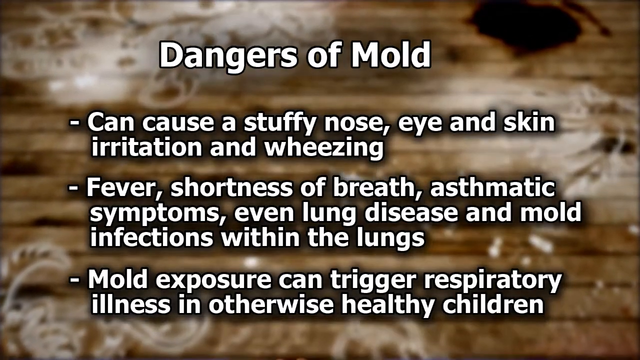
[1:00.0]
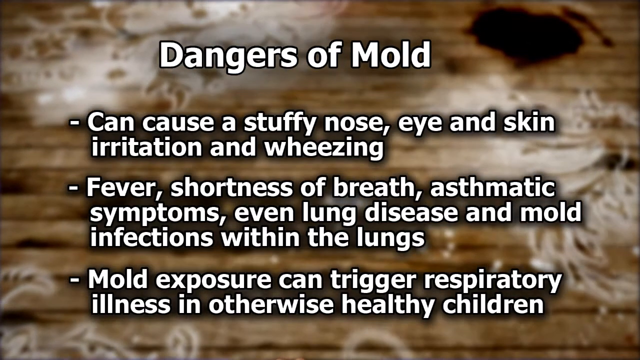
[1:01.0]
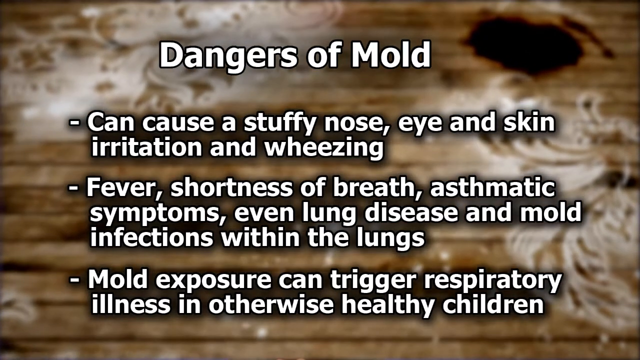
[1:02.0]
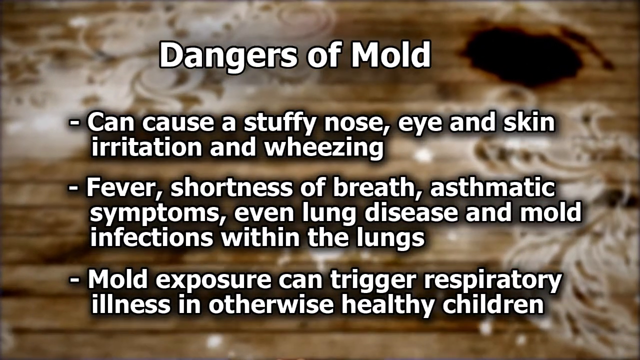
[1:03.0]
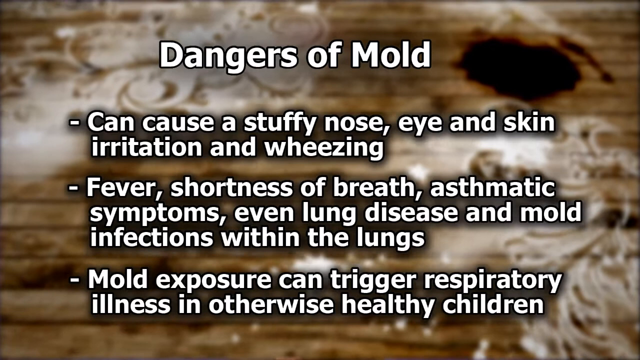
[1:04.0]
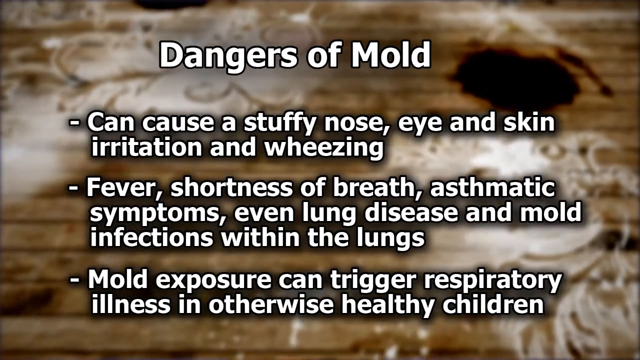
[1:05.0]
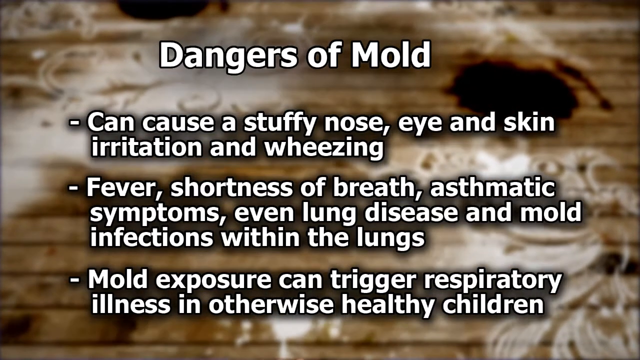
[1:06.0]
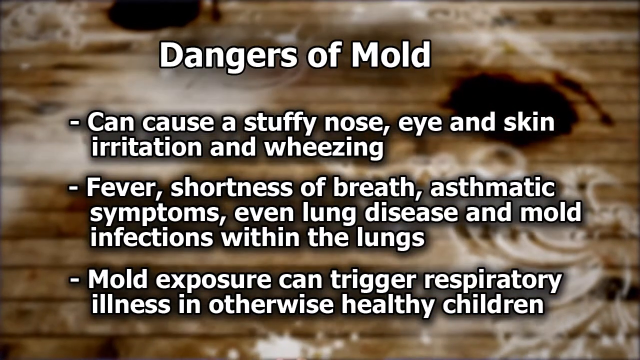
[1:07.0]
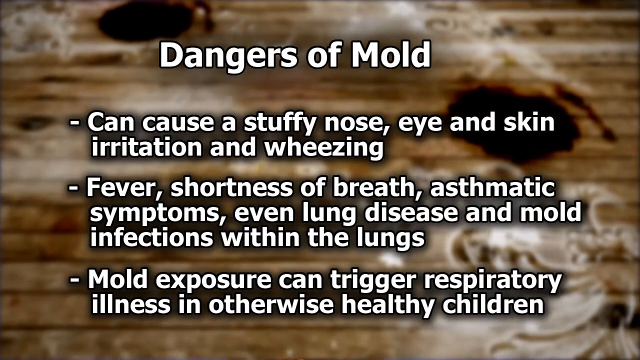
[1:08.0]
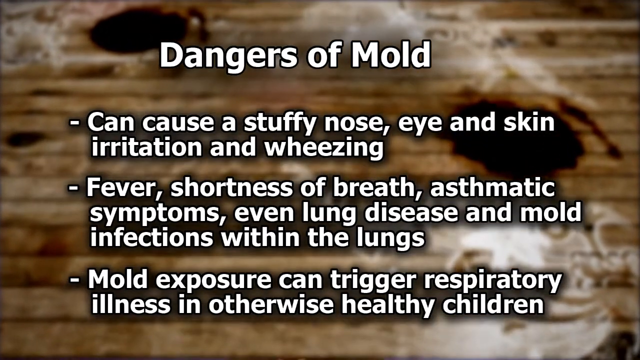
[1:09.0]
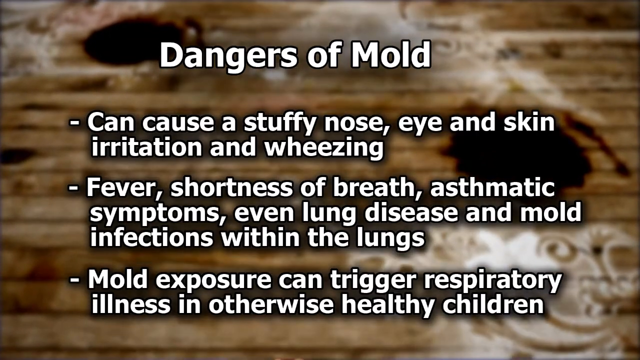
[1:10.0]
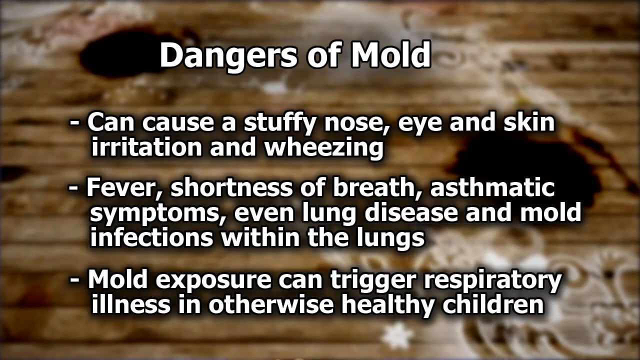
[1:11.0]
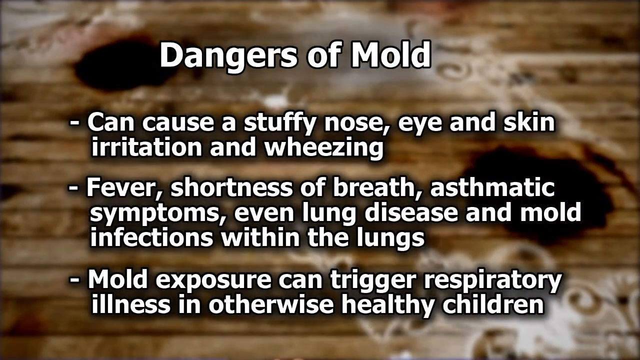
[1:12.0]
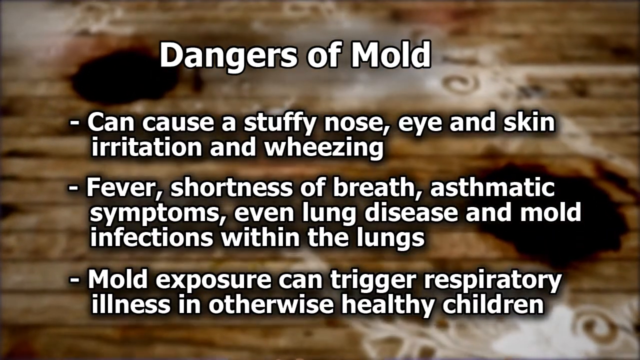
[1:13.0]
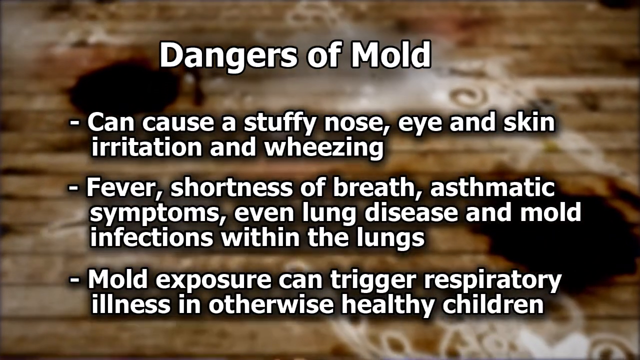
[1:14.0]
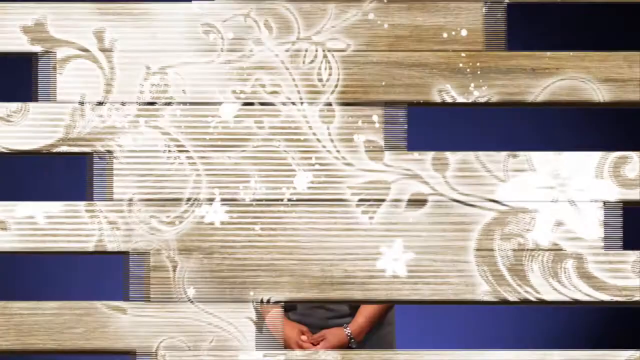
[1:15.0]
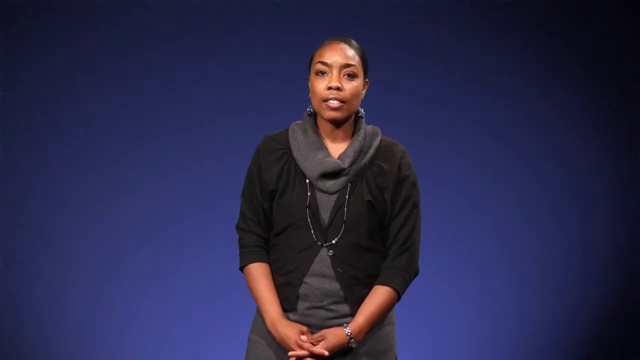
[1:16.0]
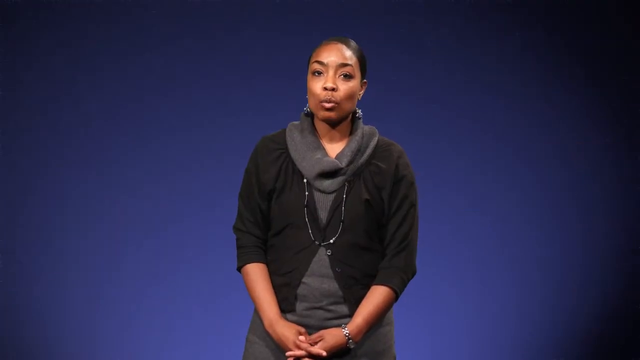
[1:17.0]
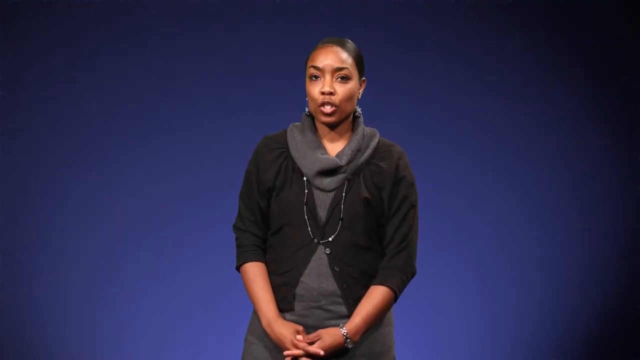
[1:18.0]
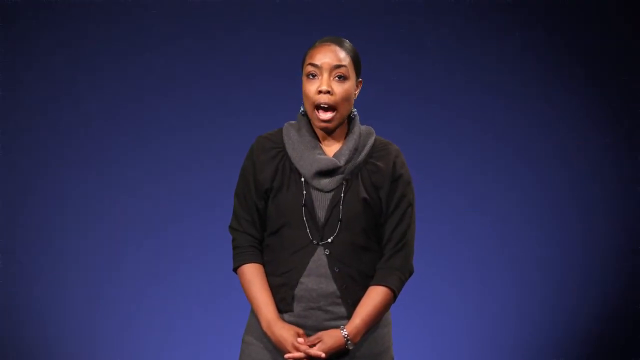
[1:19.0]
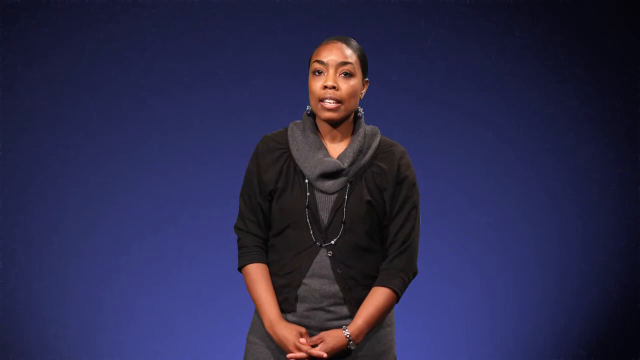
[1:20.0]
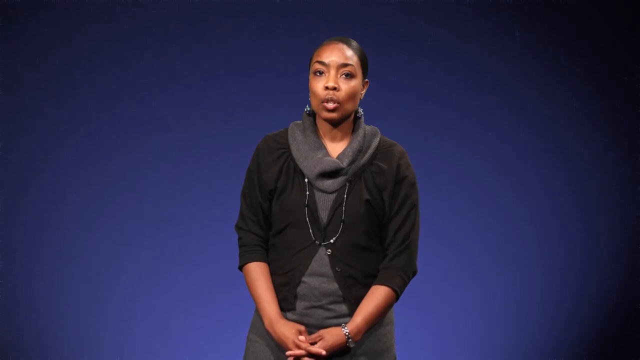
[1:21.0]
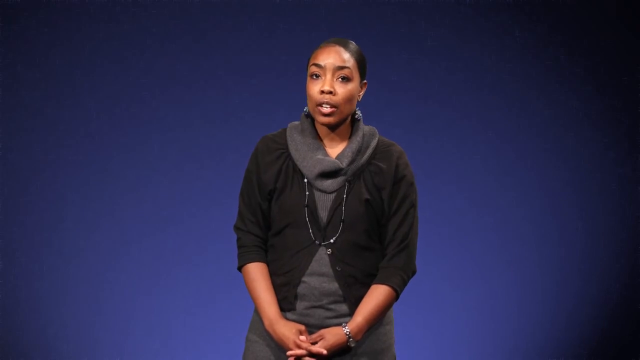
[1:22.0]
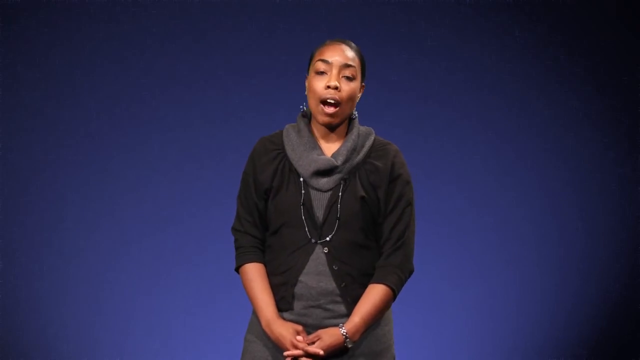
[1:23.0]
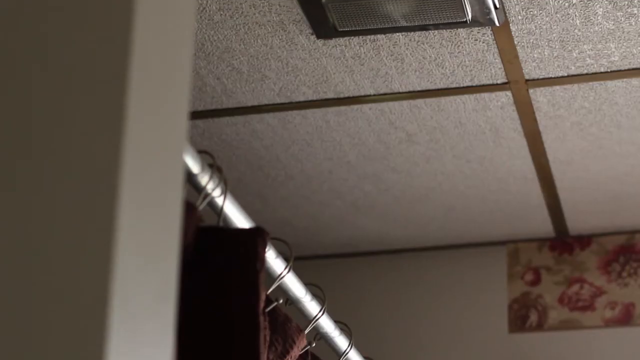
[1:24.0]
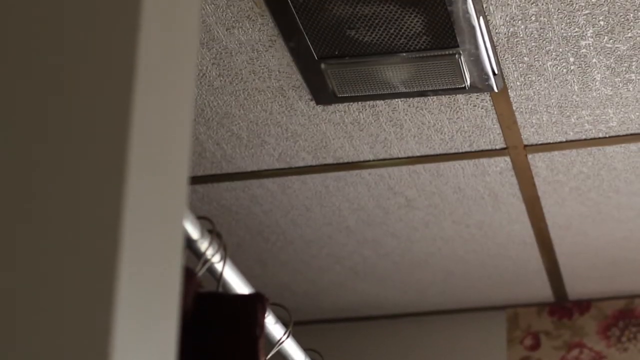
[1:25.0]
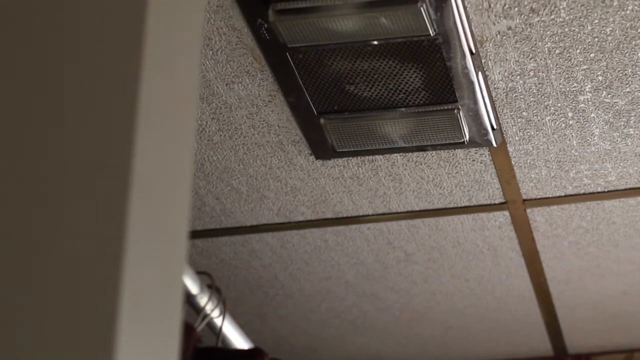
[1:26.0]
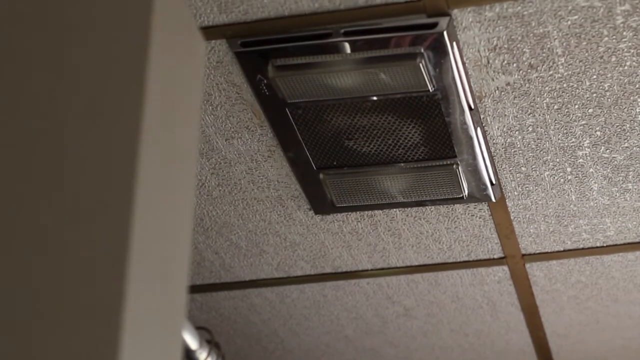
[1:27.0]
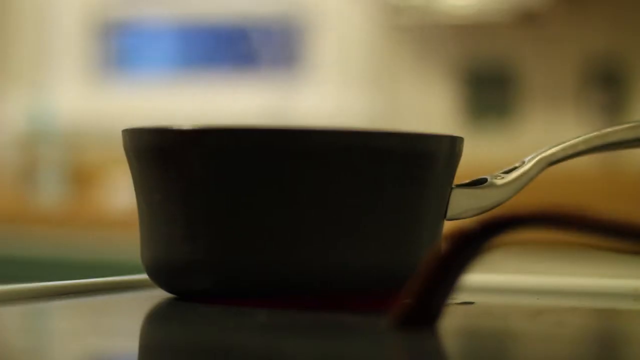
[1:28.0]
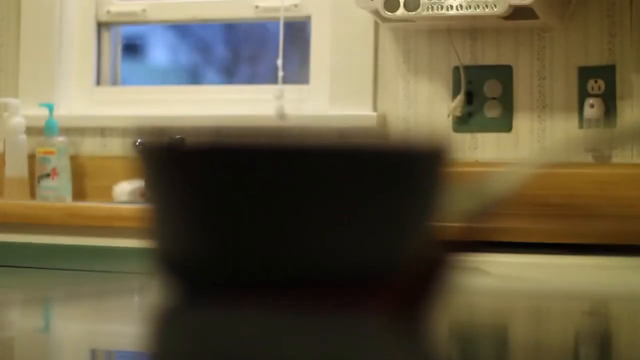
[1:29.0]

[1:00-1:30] The page about the dangers of mold stays on screen, its words still on top of a gold and white/gray background with abstract shapes moving below them. An African-American woman in a black cardigan sweater then speaks with a serious but informative expression. The video cuts to a gray ceiling with individual ceiling tiles that could be pushed up; installed in one of them is a shiny metal device with a kind of mesh that seems to be some kind of filtration system or vent. For a split second, a boiling pot is shown on a counter in a kitchen. The shot is kind of blurry; behind the pot is a wall with a window and some green outlets. To the left on the counter, in front of the window, are some hand sanitizer, soap and what appears to be a dish brush. The window is partially open and has a string hanging down to adjust the curtains or blinds.